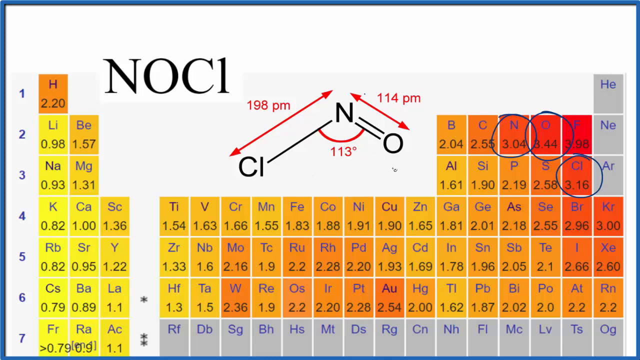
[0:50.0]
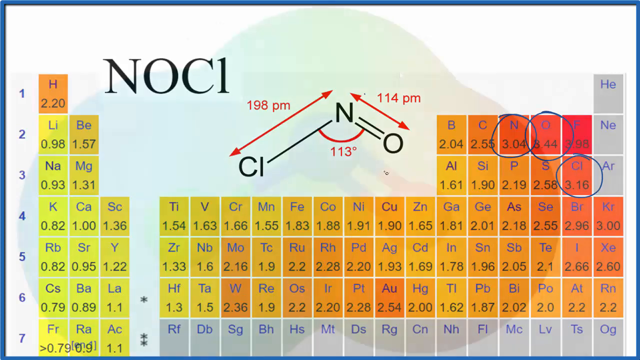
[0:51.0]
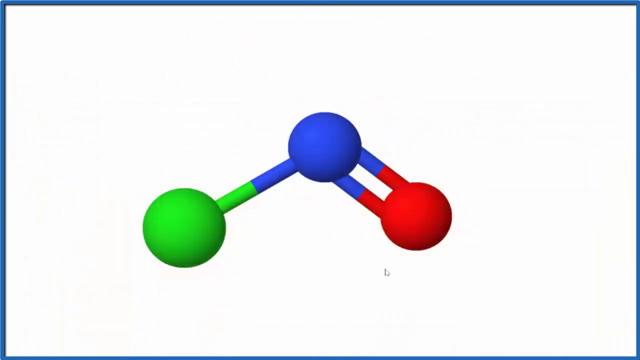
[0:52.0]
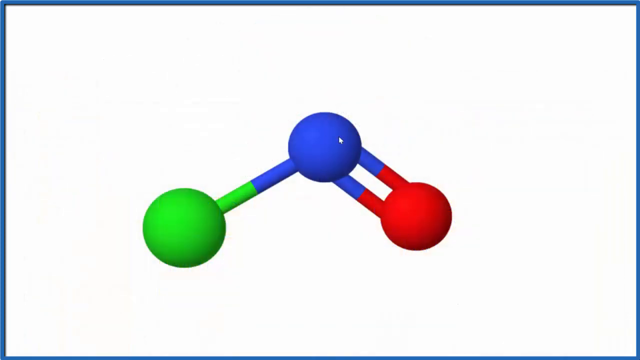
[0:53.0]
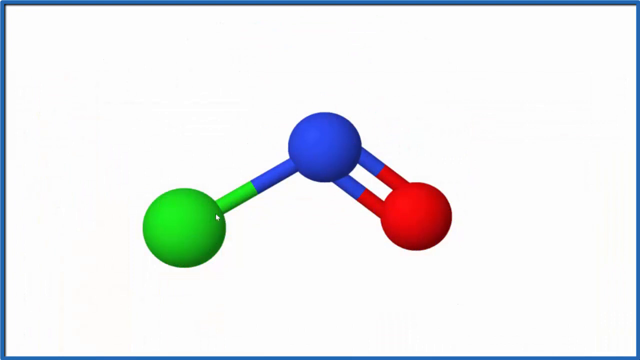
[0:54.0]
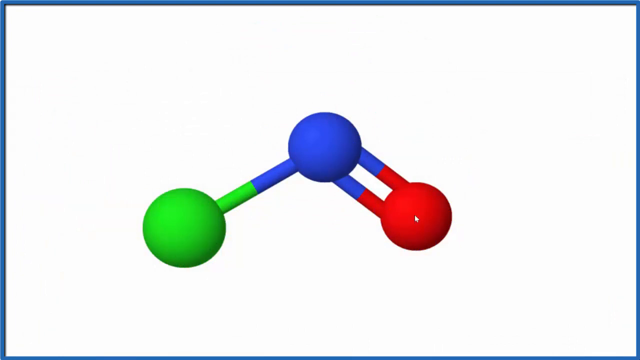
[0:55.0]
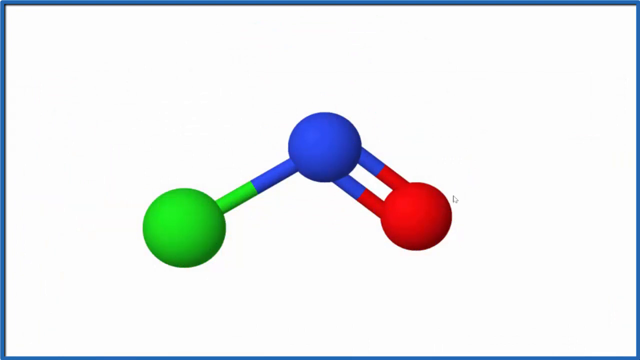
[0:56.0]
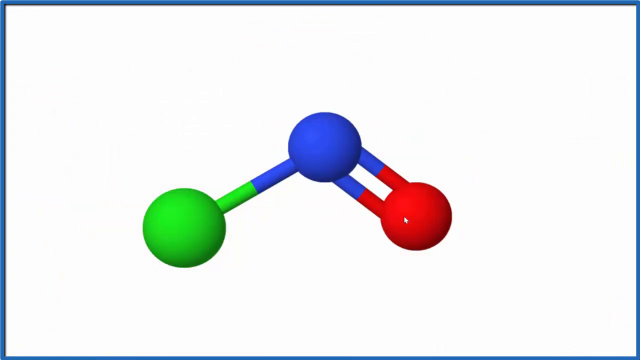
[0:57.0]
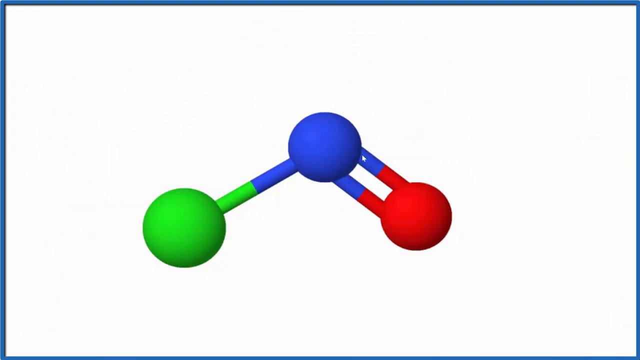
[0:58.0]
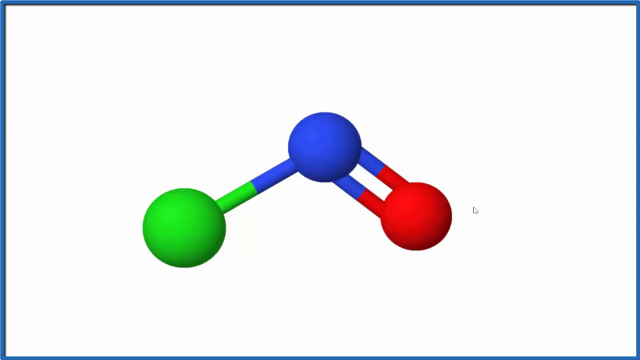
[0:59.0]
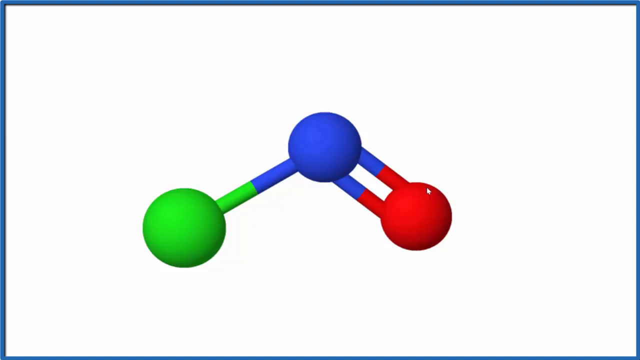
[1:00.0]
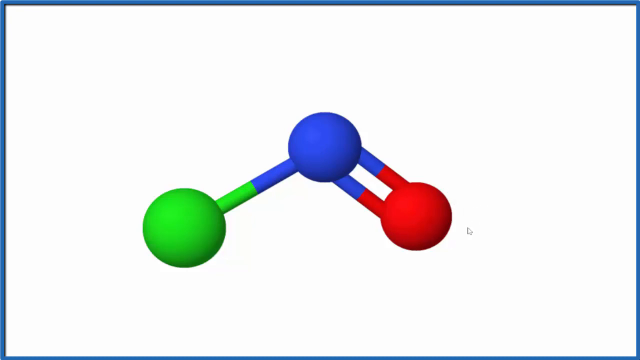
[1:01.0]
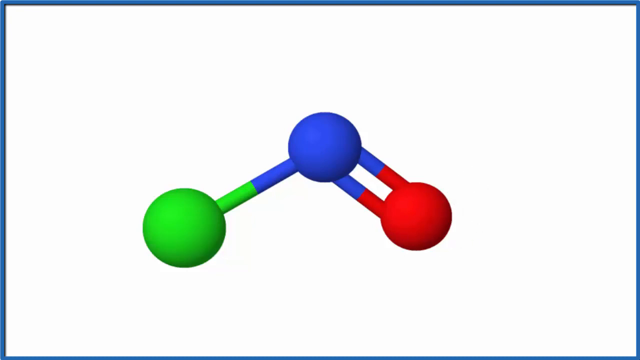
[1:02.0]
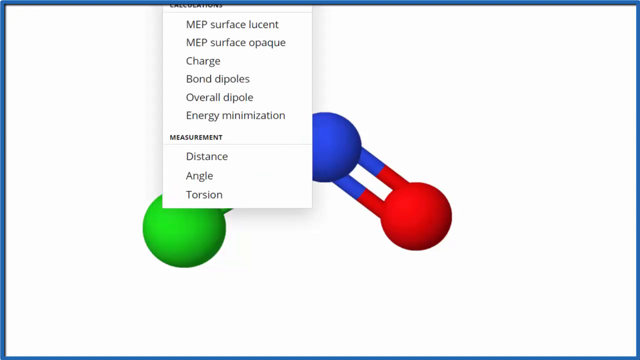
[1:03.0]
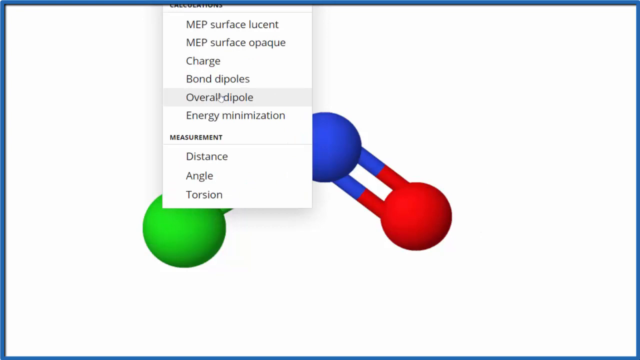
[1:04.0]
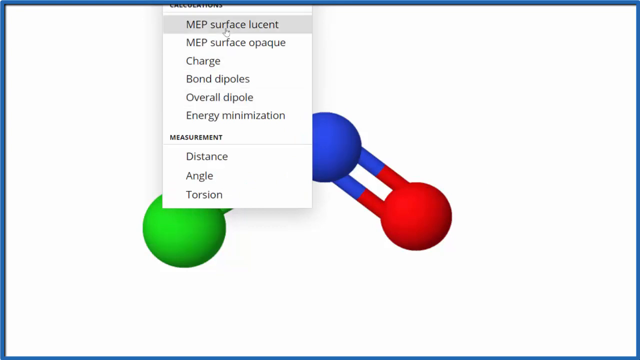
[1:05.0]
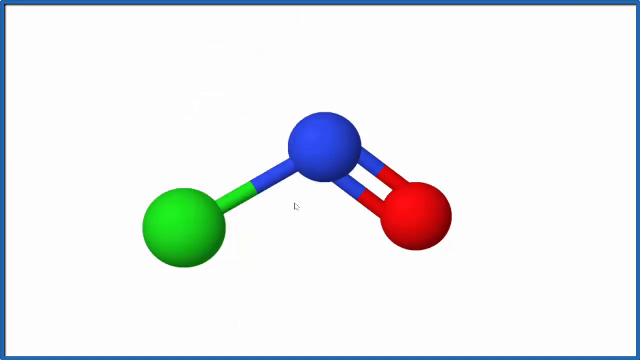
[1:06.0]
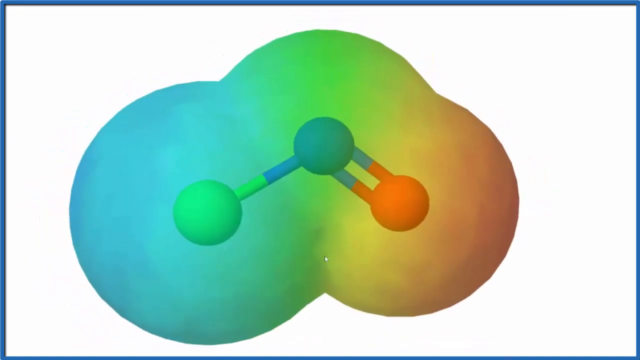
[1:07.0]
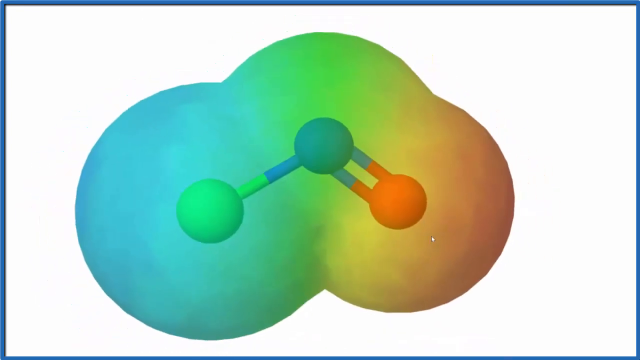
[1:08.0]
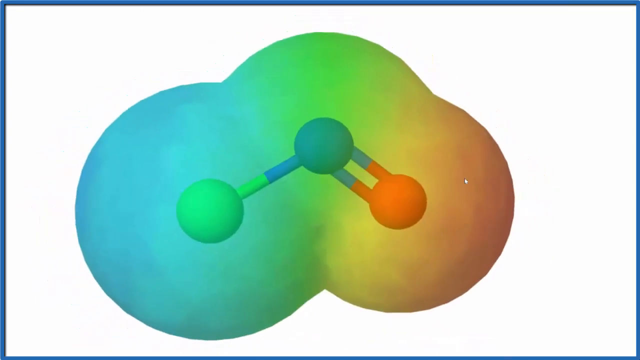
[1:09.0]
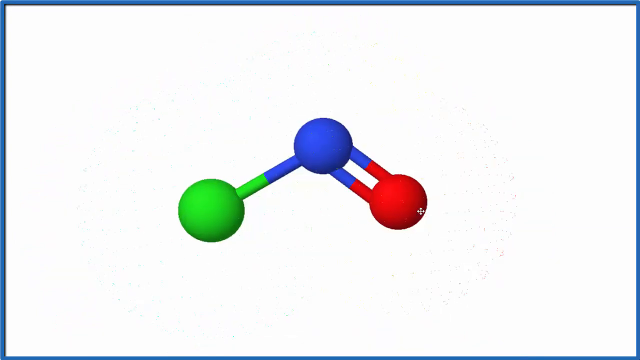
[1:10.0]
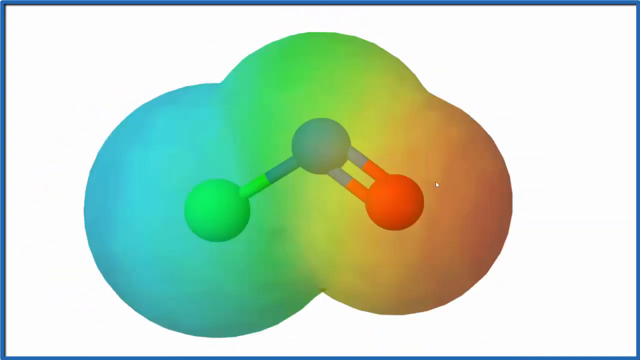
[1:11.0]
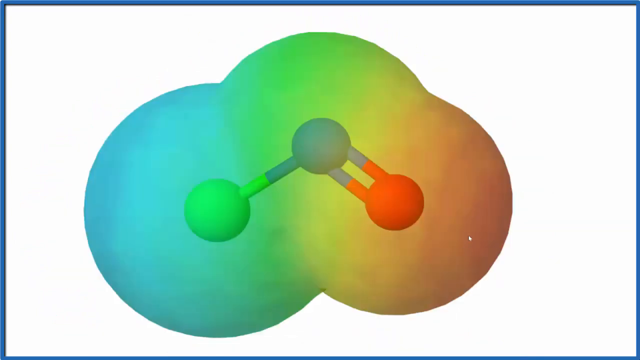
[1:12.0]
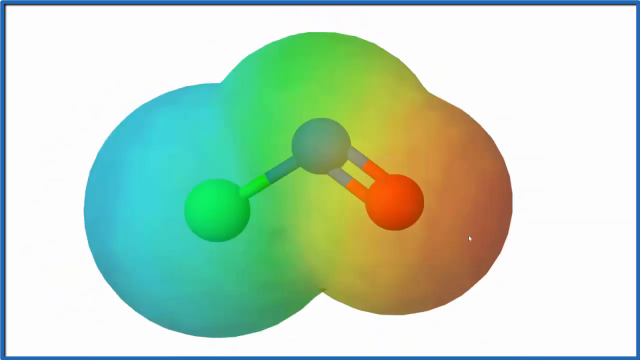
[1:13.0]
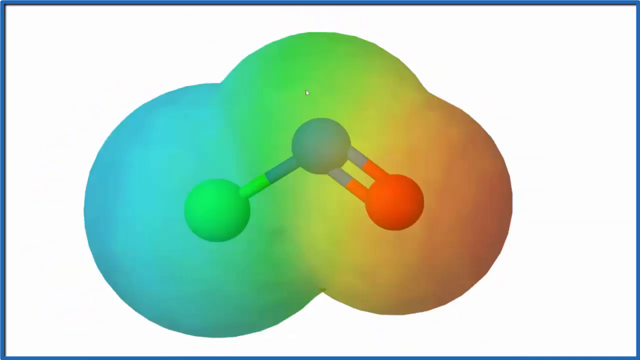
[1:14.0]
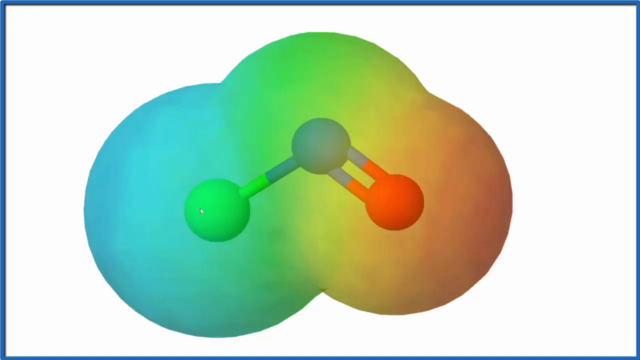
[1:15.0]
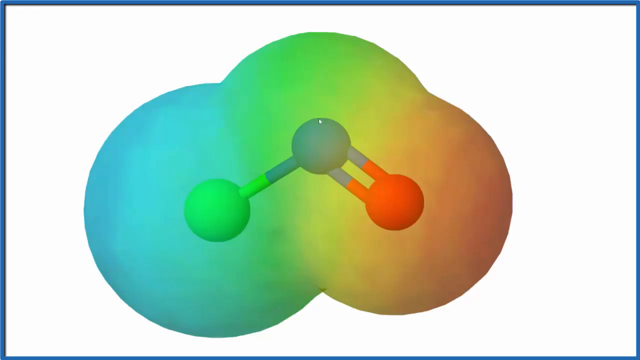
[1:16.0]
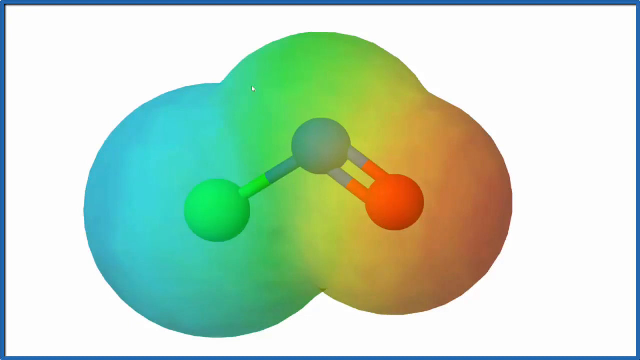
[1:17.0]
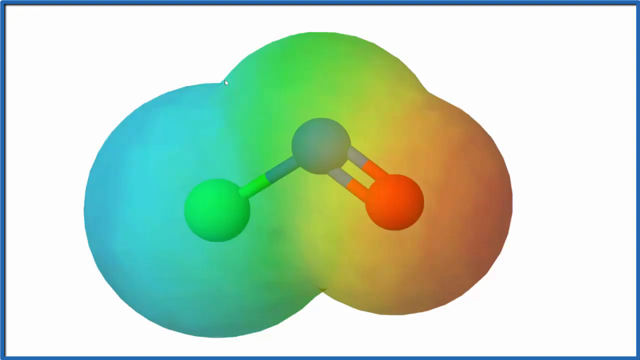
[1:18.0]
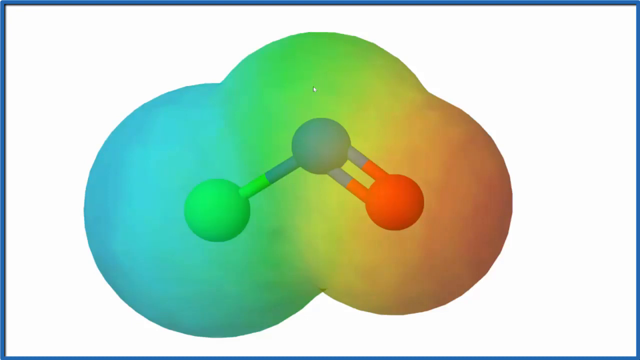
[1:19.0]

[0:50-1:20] The video switches to a blue or white background with a blue border. In the center is a blue circle. Going down to the left is a bar that is half blue and then turns green, going down to a green circle. Two blue ones come off the bottom right; halfway down they turn red and connect to a big red circle. The cursor goes around in circles over the blue, then over the green, then over the red, without leaving any marks. It stops, goes back up to the blue, back to the right of the red, and circles the red a couple more times. It then goes up off the screen and clicks on something, bringing down a dropdown menu; its heading is cut off at the top but is possibly "classifications". There are six clickable links below it, then "measurement" with three below that, going down to "bond". The cursor goes back up to the very top and clicks on it. A little bubble, almost like a cloud, appears around the molecule: blue on the left side, green in the center and an orangish color on the right side, and the view zooms out from it a little. The cursor is on the left side, moving up and down in the cloud; the cloud vanishes, then comes right back with the cursor still on the left side moving up and down. The cursor then goes toward the top and back to the red circle.